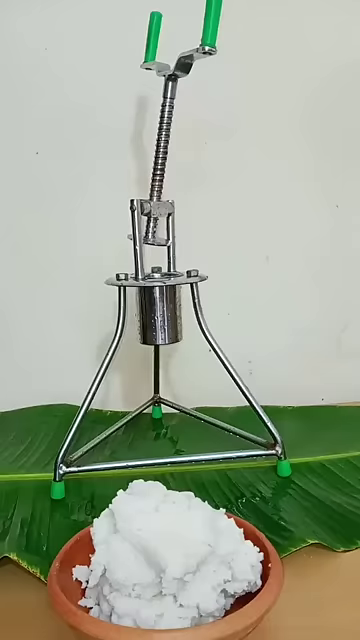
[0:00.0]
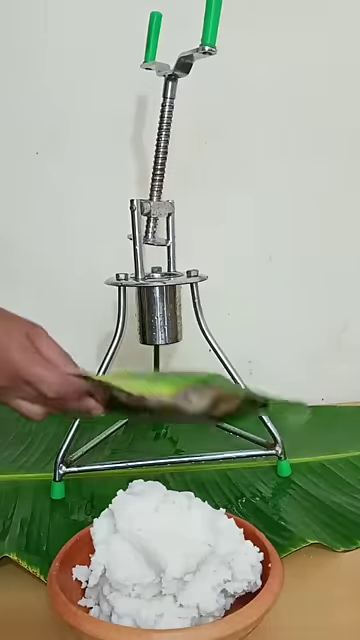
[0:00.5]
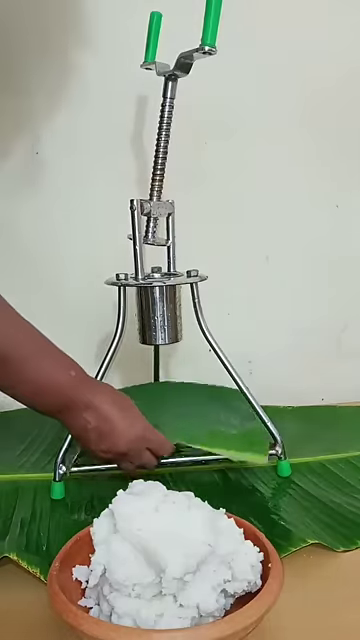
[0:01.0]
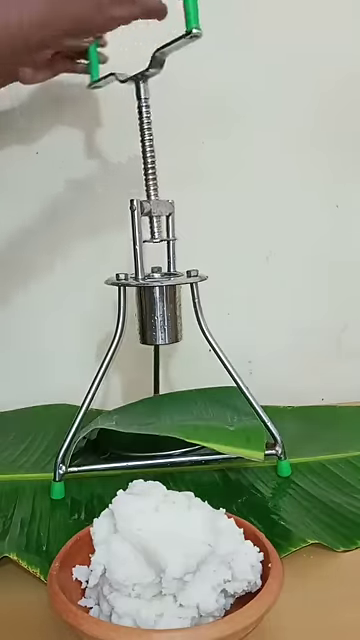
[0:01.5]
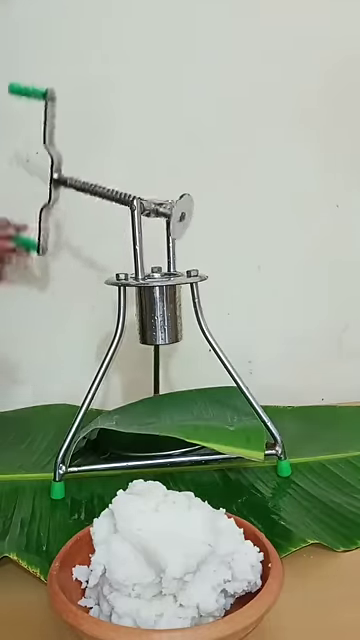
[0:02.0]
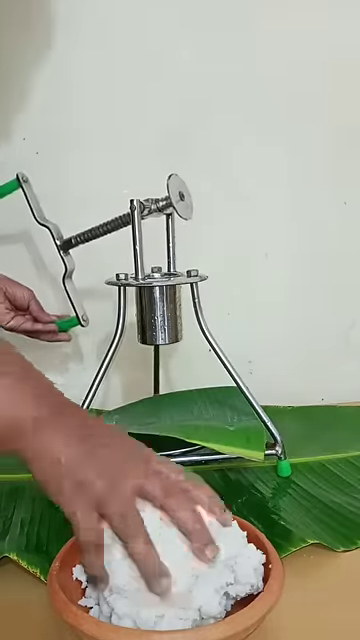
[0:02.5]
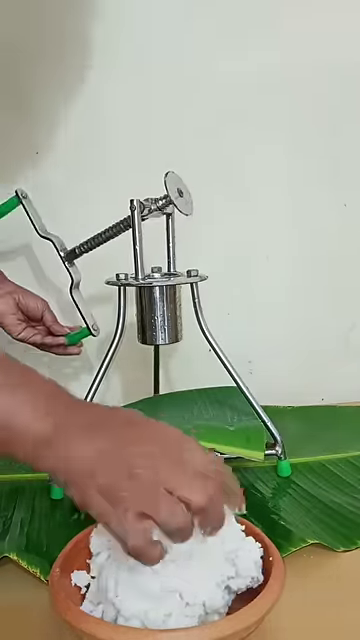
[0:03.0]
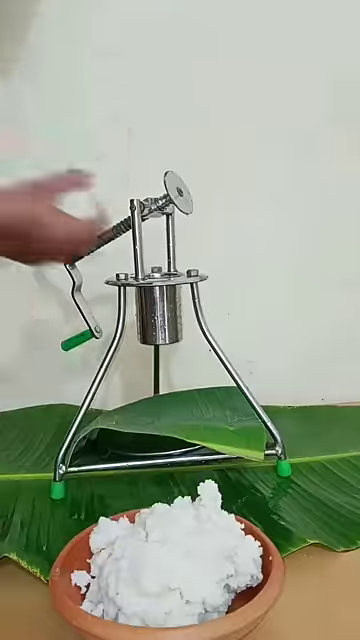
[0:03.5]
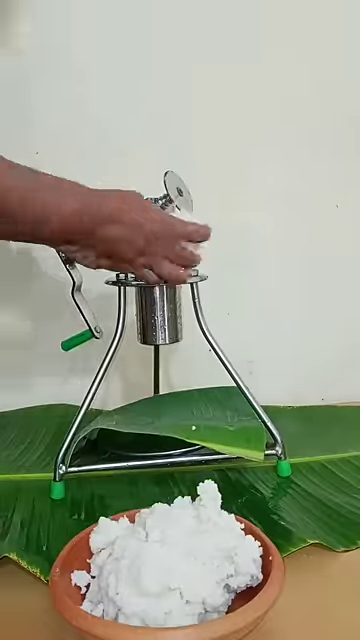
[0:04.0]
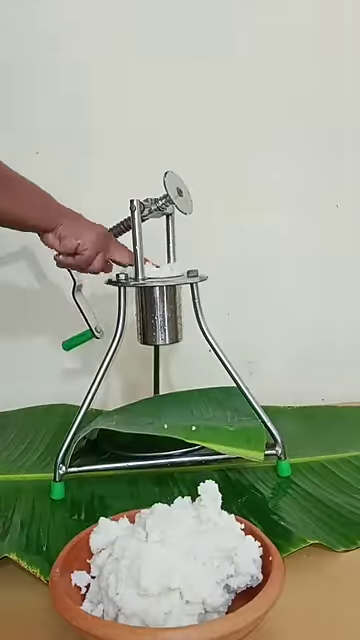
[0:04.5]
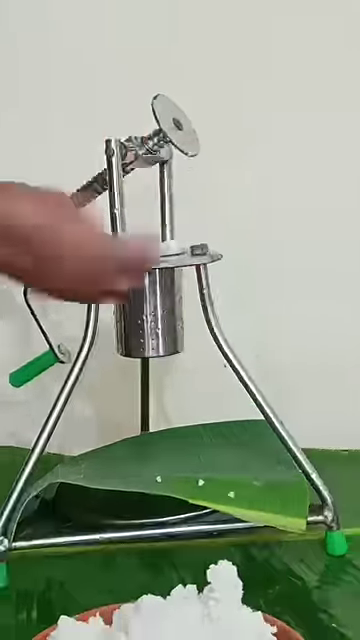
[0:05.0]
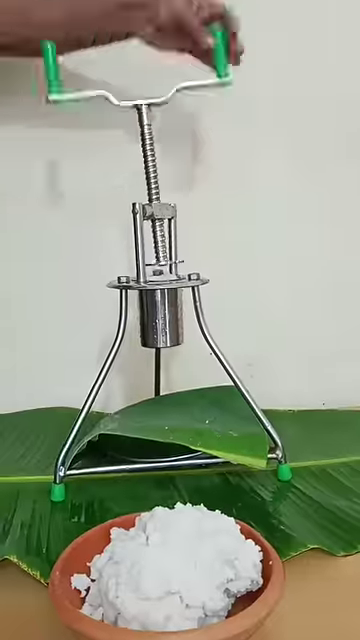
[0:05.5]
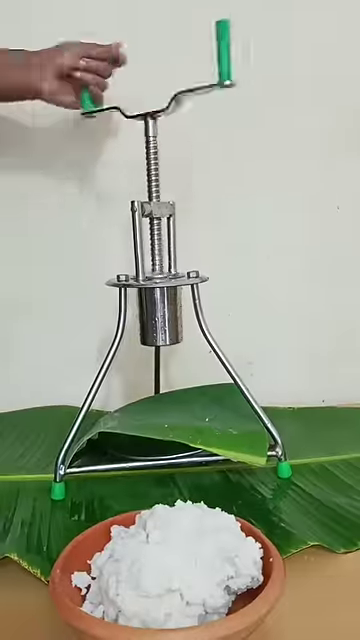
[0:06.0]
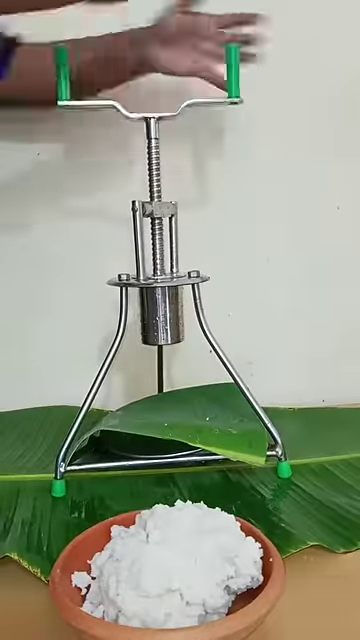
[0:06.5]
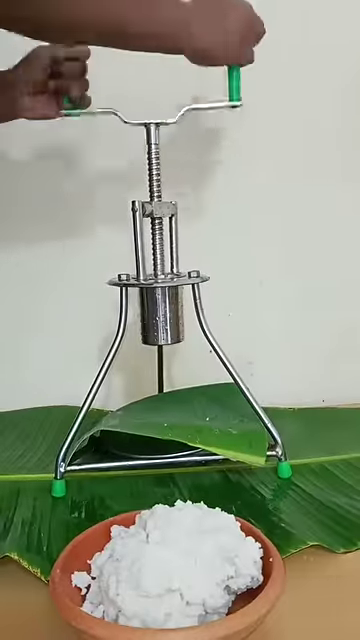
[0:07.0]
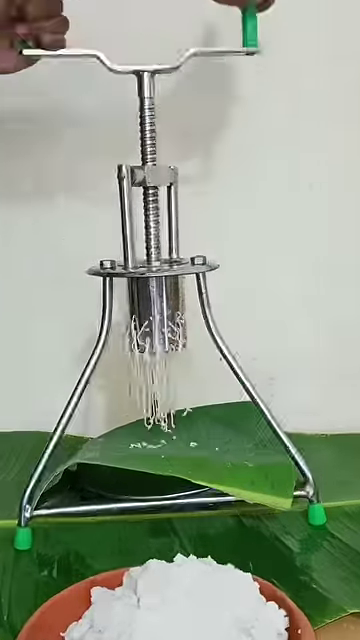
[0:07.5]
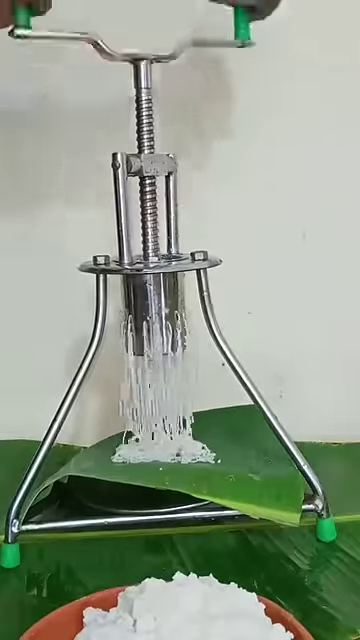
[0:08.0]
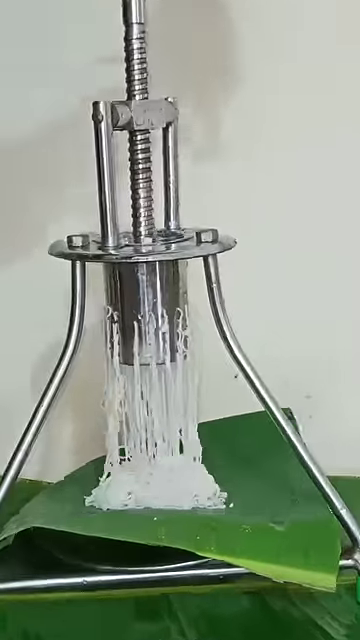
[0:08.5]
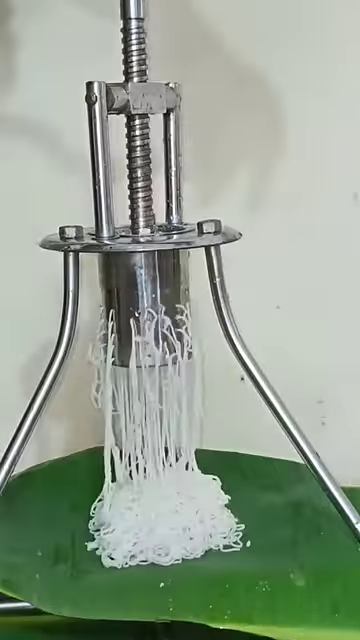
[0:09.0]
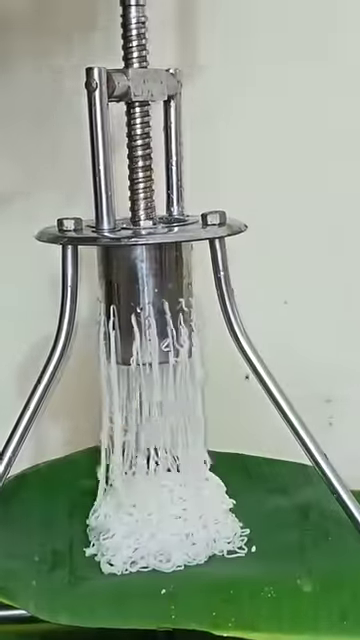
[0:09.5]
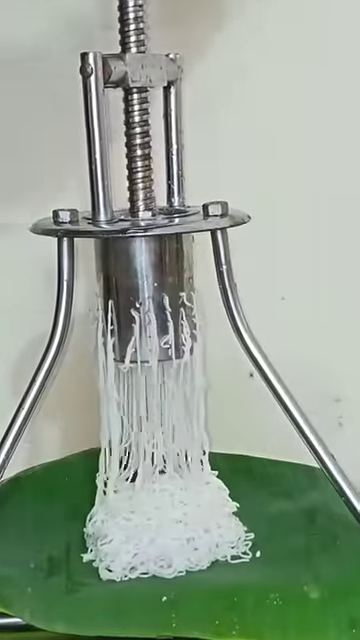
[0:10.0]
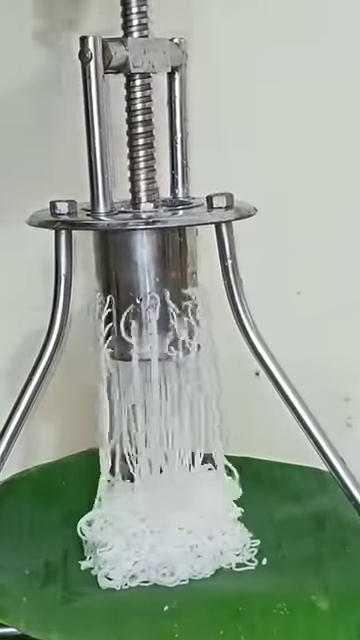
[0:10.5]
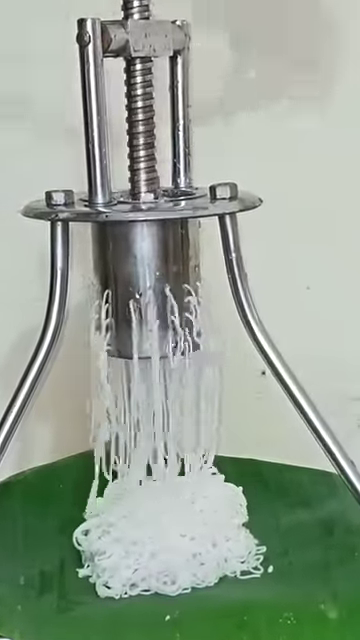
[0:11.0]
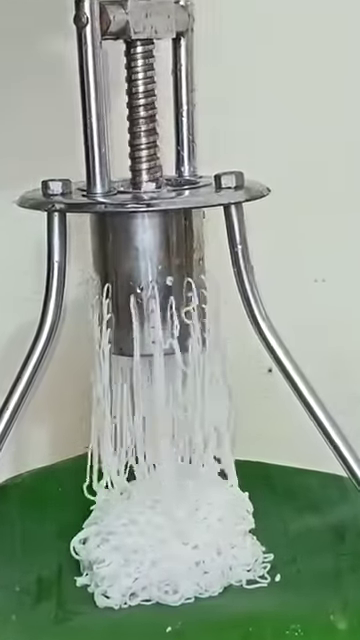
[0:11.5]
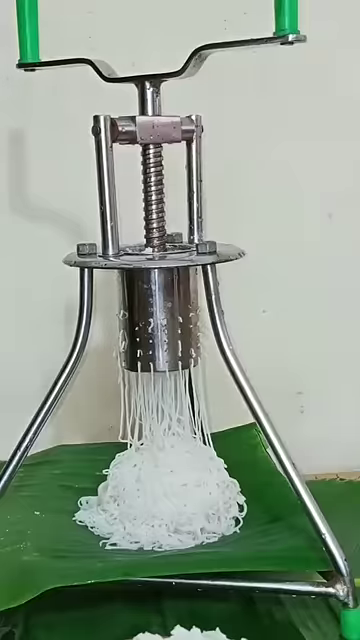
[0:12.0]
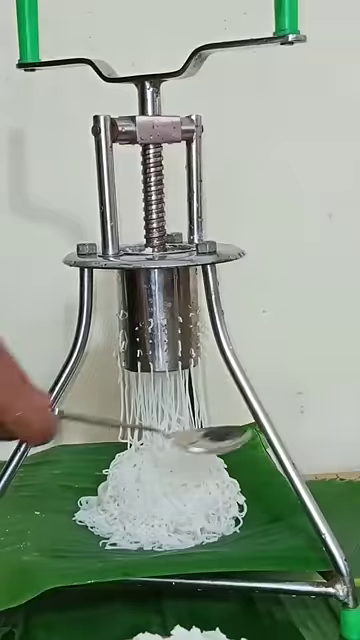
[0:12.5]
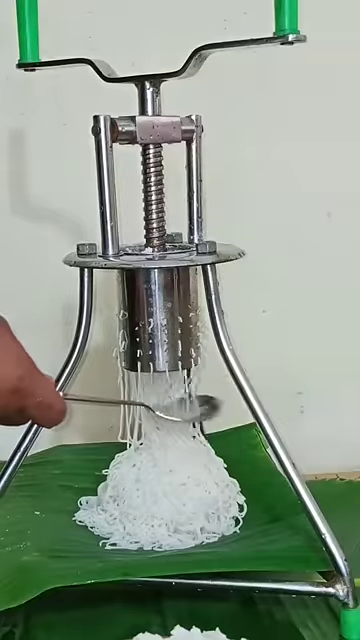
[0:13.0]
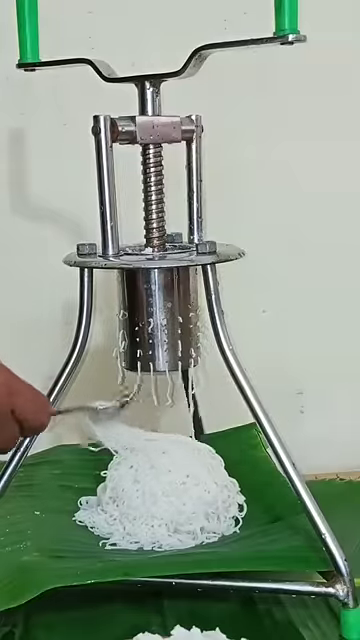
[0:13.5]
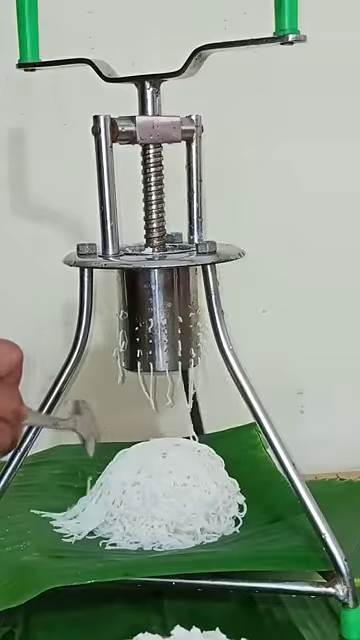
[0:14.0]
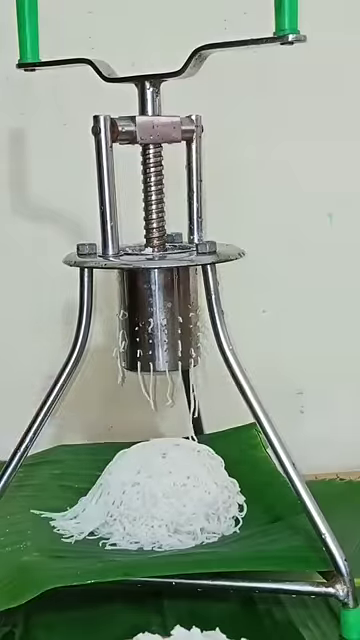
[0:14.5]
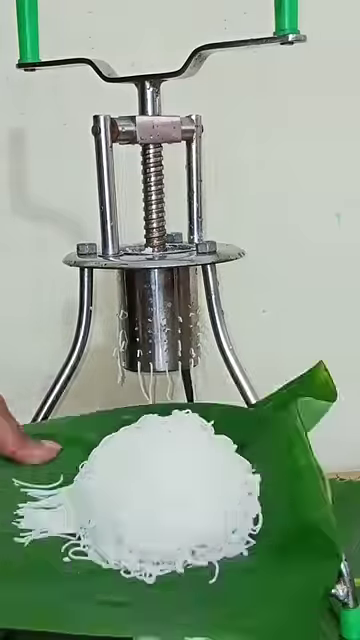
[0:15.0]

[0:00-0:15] The video opens on a machine that looks very simple and mechanical. It is made of metal, apparently stainless steel, and has light green plastic-capped feet. It is on a very large banana leaf, and a small section of banana leaf is on the bottom of the machine. The machine comes in two main parts: the bottom part is a stand with a cylinder in the middle, and the top part swivels downward, with two green handles on one end and a disc on the other. A woman lifts the top and swivels it downward, then picks up a handful of white stuff that looks like dough from a light brown bowl on another light brown table and puts it into the cylinder of the bottom part. She tilts the top part of the machine up and grabs both handles. As she swivels the handles, the disc pushes down into the cylinder, pushing the dough out through small holes that were not visible before, and the dough comes out of the holes as noodles. She then takes a large spoon and moves it through the noodles to cut them off from the rest of the dough, and she picks up the banana leaf with the noodles on it.